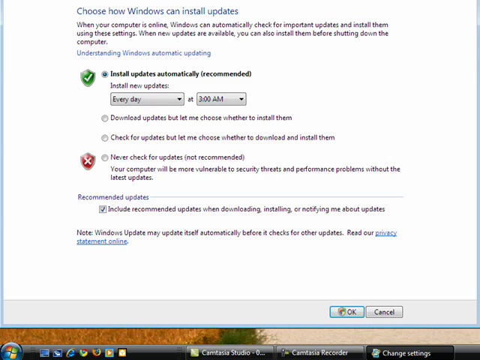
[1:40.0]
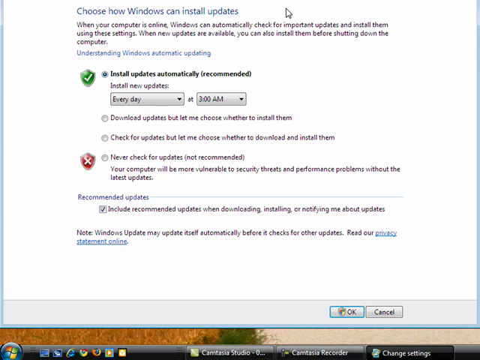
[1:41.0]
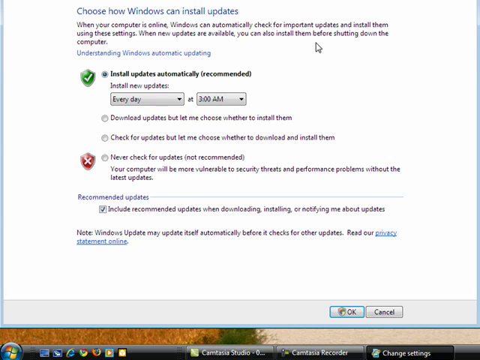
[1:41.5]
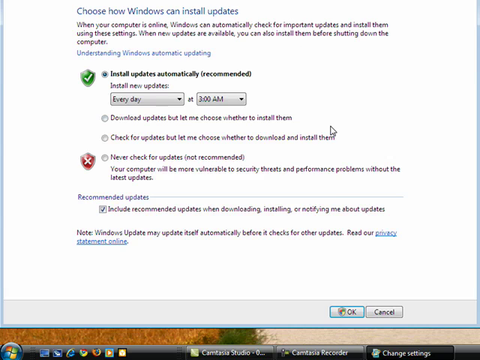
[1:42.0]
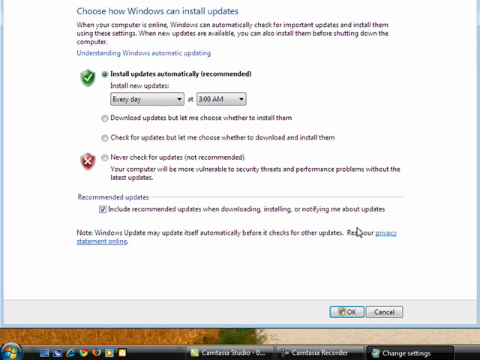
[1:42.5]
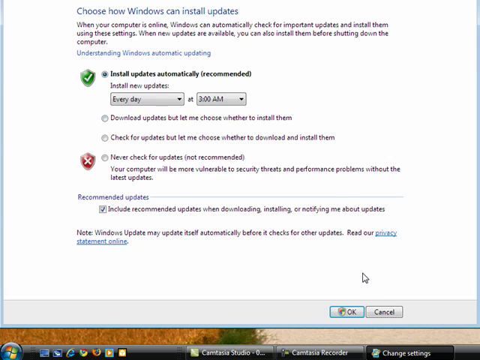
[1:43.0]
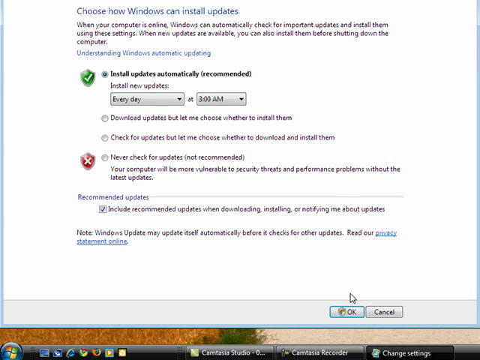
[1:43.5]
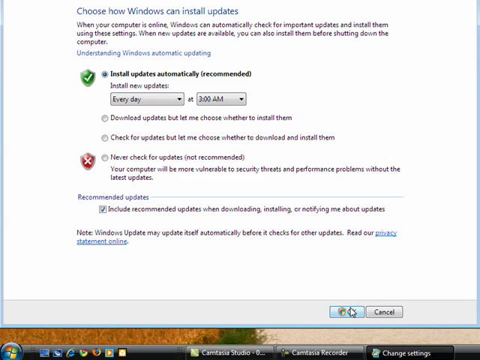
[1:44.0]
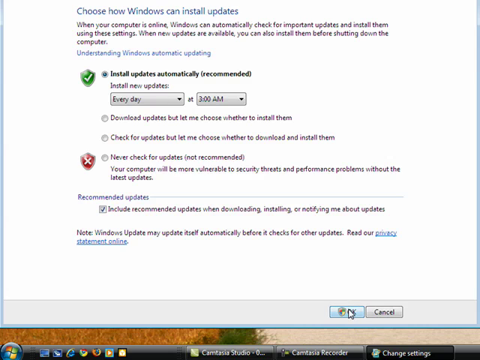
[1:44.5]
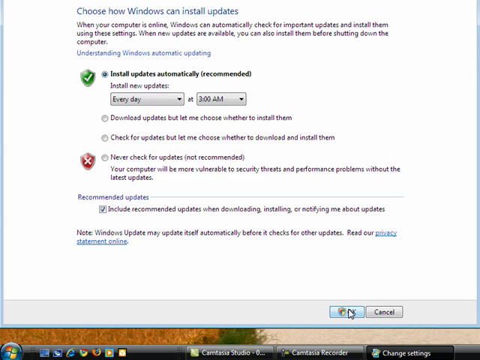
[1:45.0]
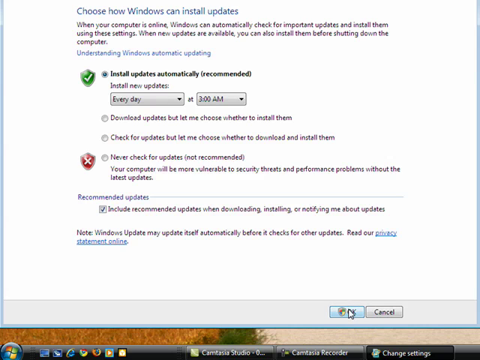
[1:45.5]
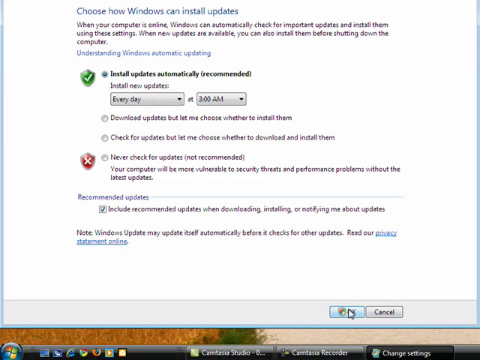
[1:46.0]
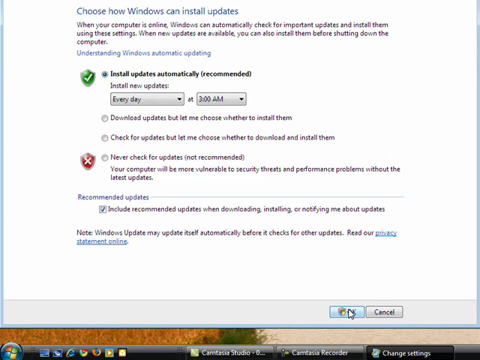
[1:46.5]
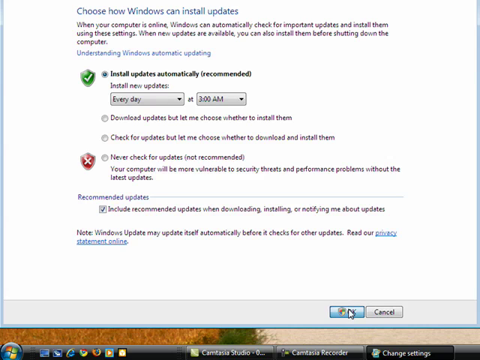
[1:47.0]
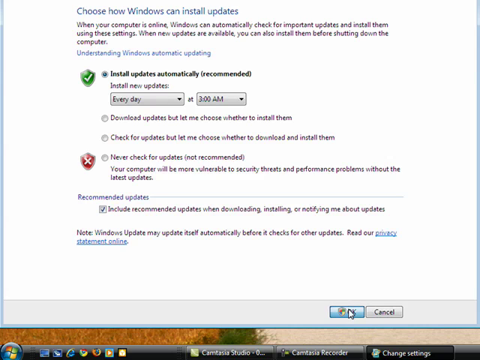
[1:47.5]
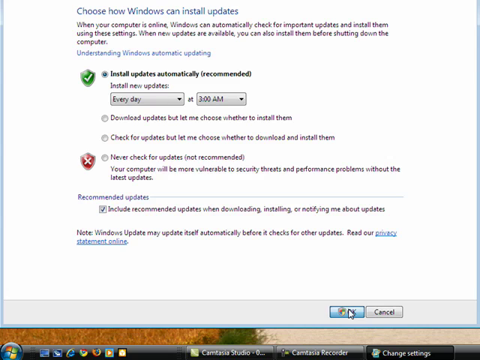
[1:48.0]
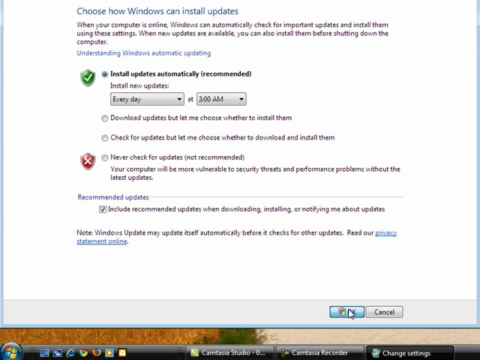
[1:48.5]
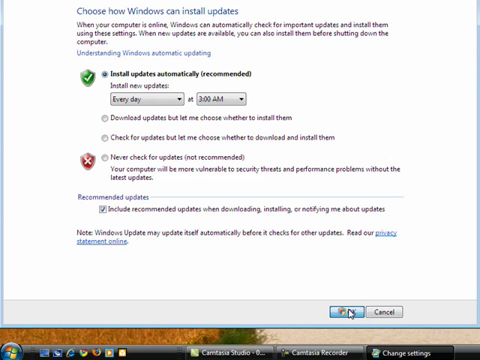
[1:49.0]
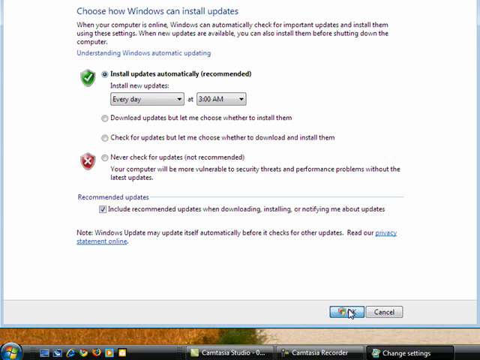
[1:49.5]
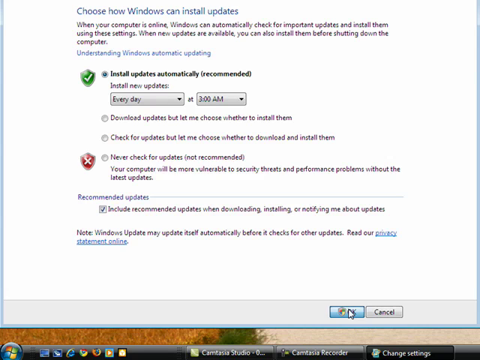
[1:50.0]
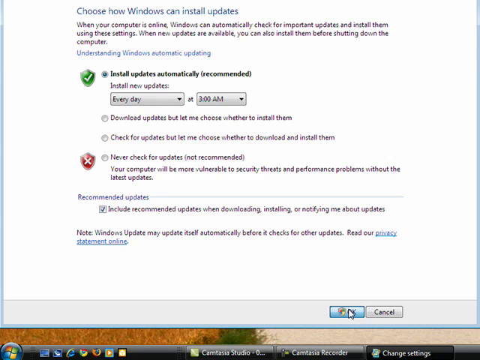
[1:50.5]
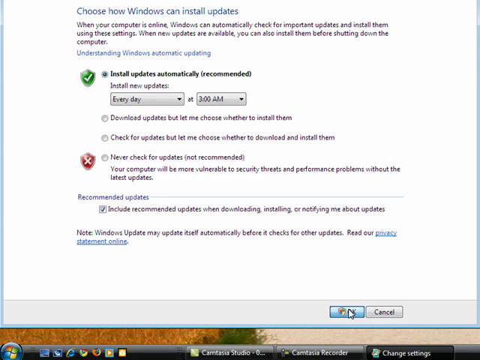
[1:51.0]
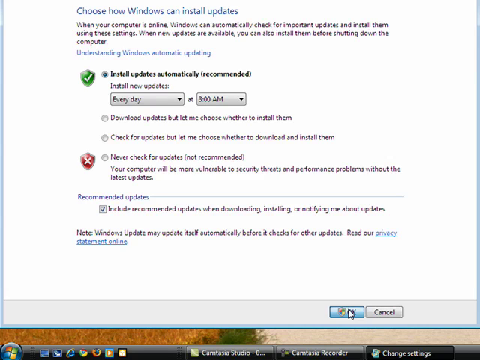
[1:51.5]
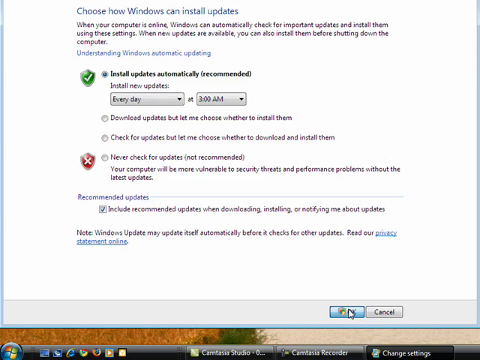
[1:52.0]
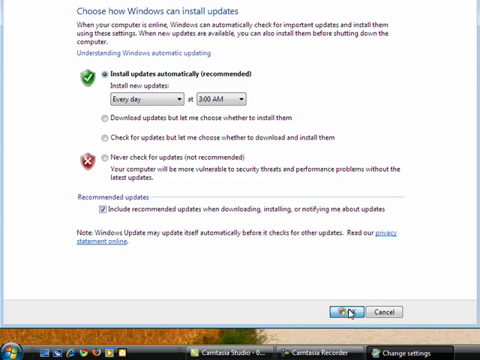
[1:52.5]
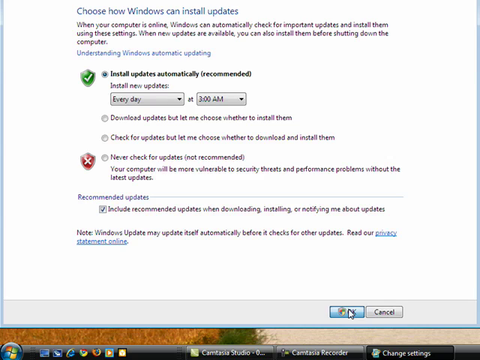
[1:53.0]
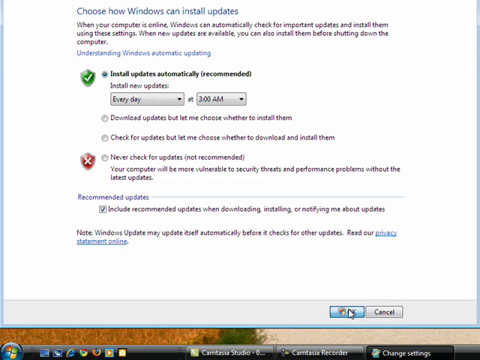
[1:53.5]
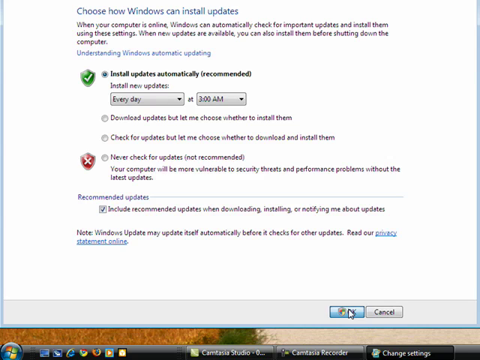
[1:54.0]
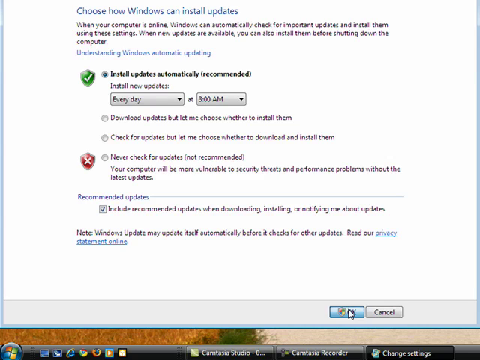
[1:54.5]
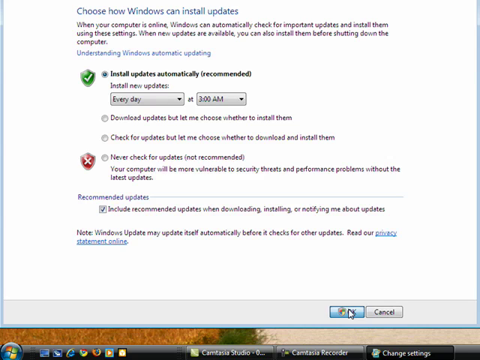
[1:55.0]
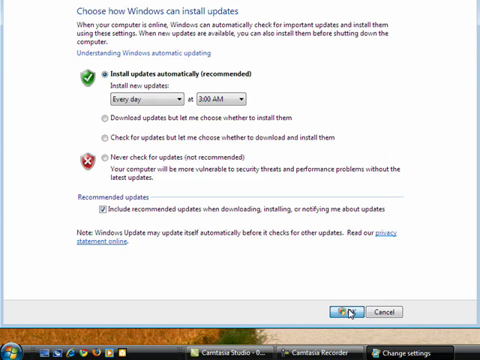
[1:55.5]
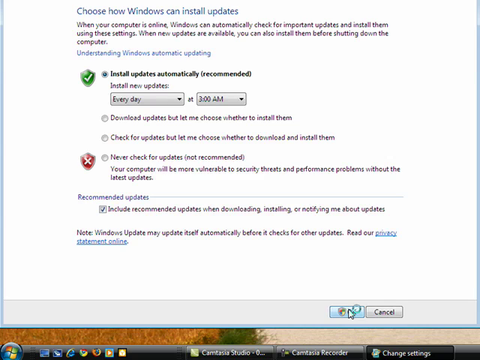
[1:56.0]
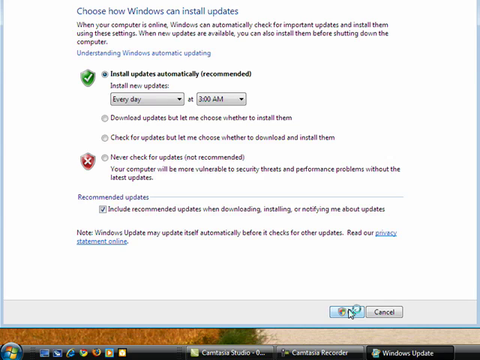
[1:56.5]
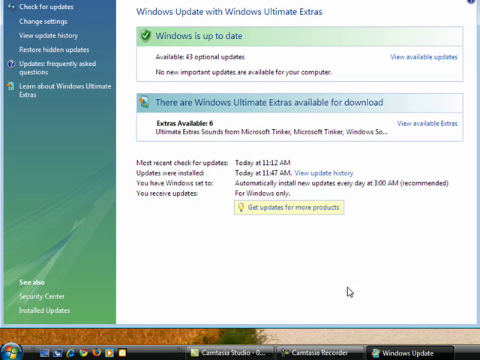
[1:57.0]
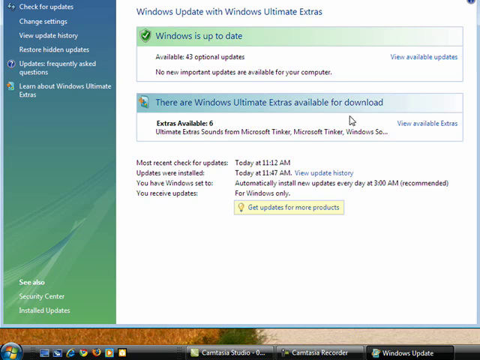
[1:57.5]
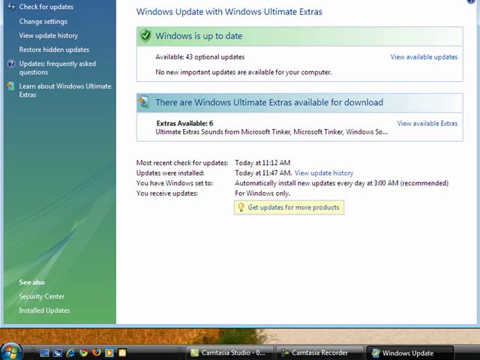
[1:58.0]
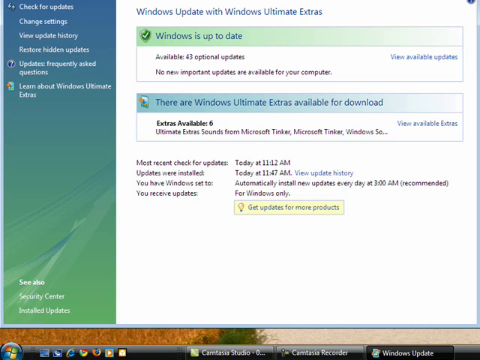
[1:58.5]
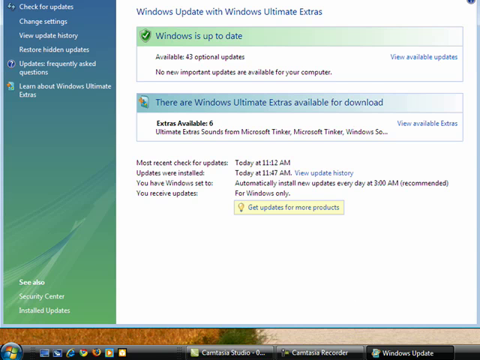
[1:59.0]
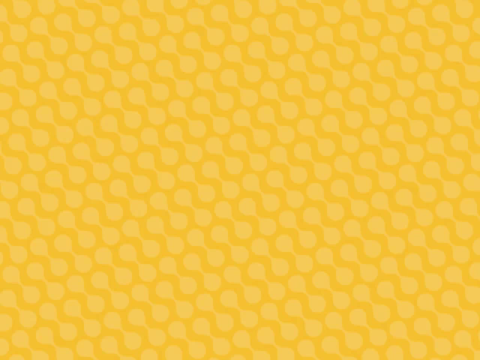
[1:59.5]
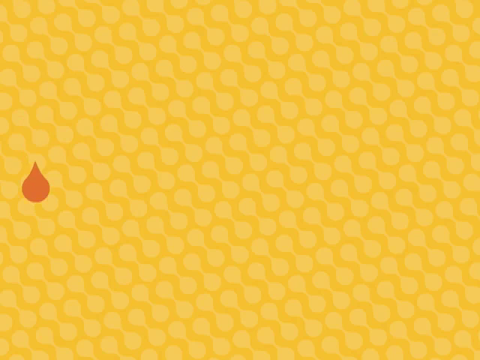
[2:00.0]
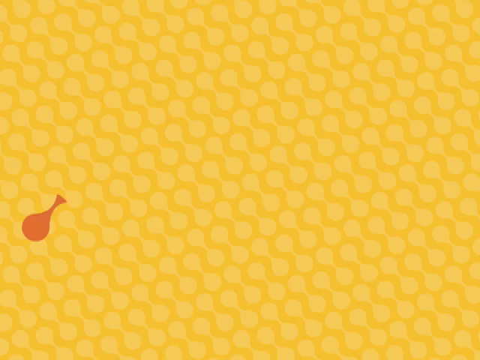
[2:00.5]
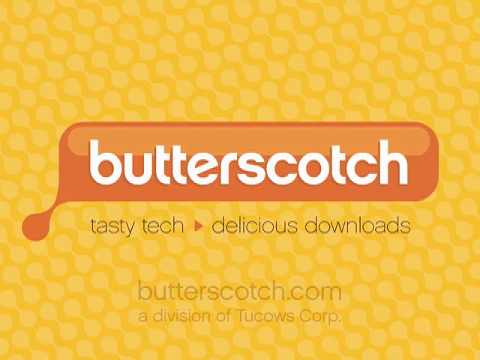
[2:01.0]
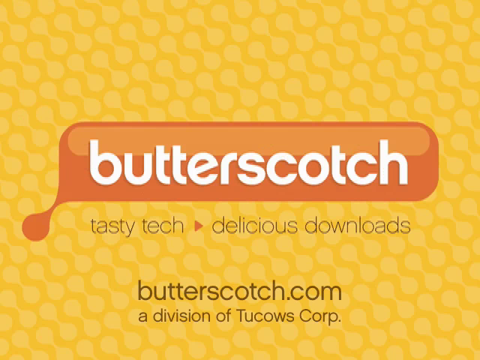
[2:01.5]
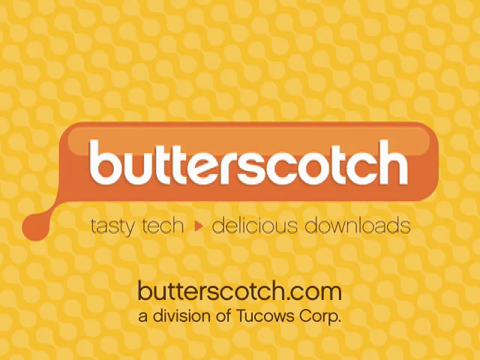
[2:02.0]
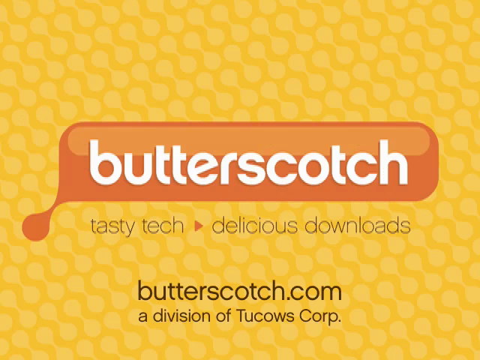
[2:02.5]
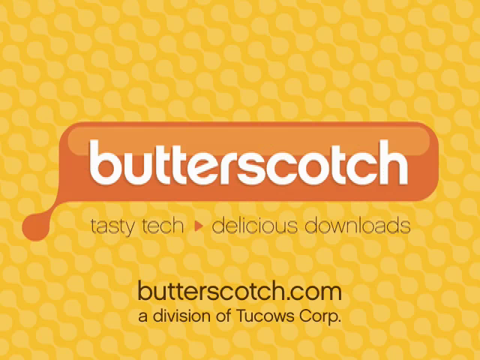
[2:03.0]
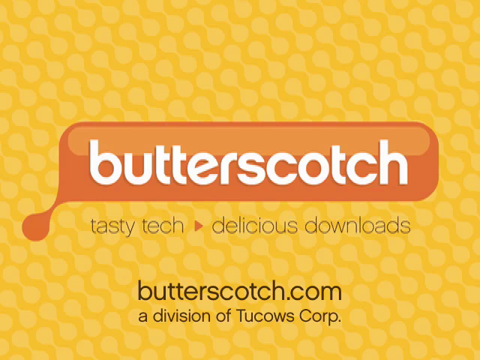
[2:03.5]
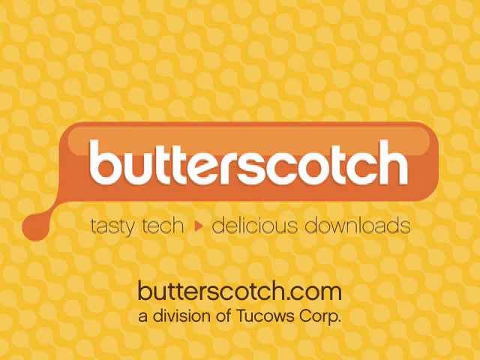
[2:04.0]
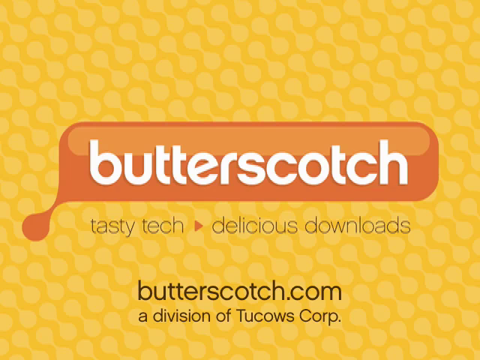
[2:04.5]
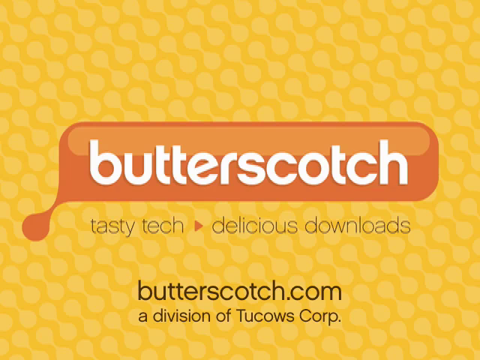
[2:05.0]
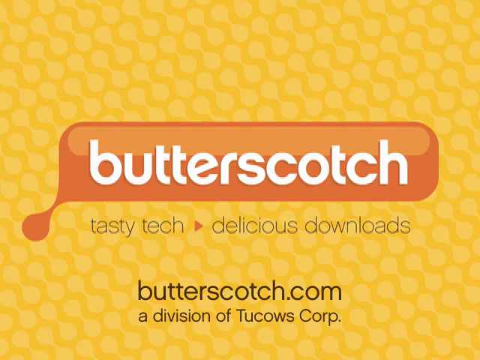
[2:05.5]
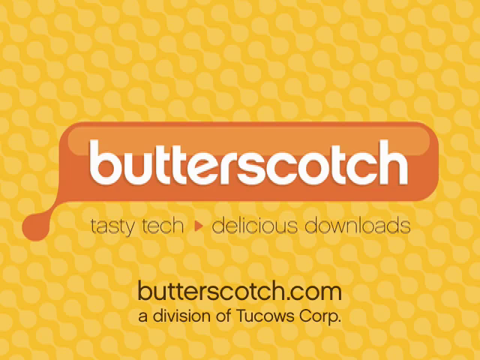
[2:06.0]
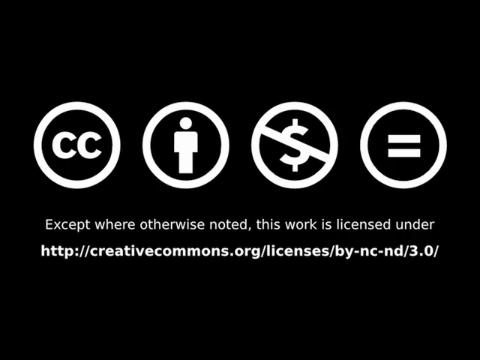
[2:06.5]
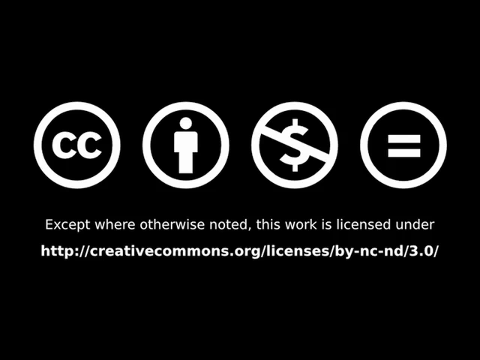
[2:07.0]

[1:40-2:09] The person clicks the OK button on the screen. The video then moves to its main screen, which has a yellow background and says "Butterscotch tasty tech delicious downloads, butterscotch.com, a division of Two Cows Corp." Next comes a screen that says "Except when otherwise noted, this work is licensed under http://creativecommons.org licenses by-nc-nd/3.0." Above this text are four circles: one says "CC," one has the image of a person on it, the third has a dollar sign with a slash through it, and the fourth has an equal sign.